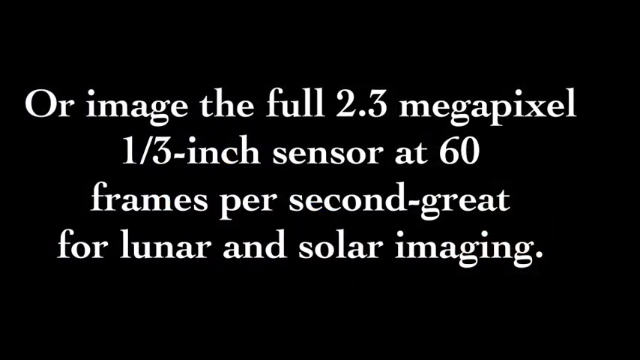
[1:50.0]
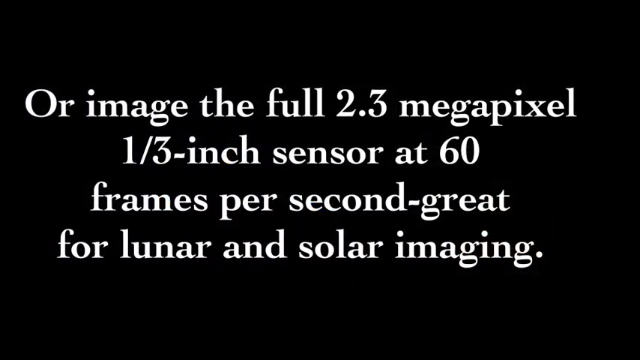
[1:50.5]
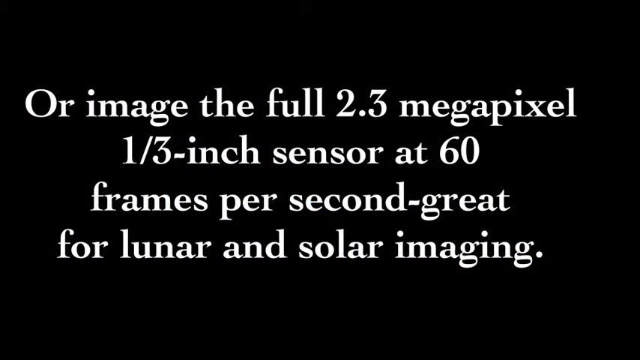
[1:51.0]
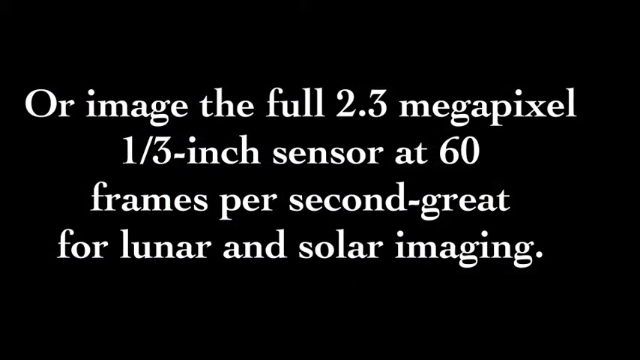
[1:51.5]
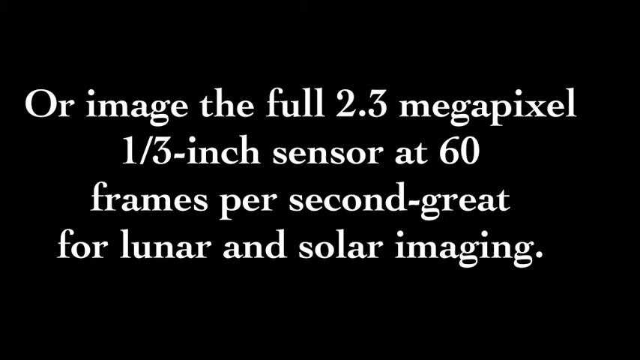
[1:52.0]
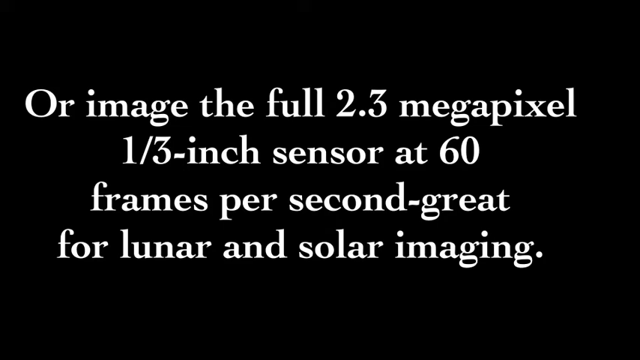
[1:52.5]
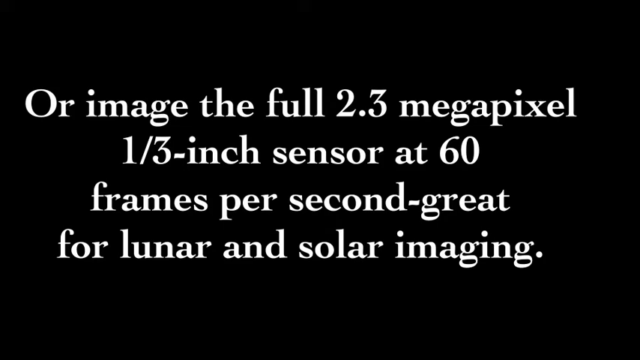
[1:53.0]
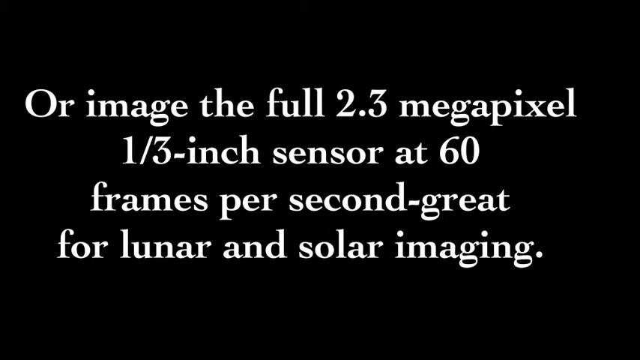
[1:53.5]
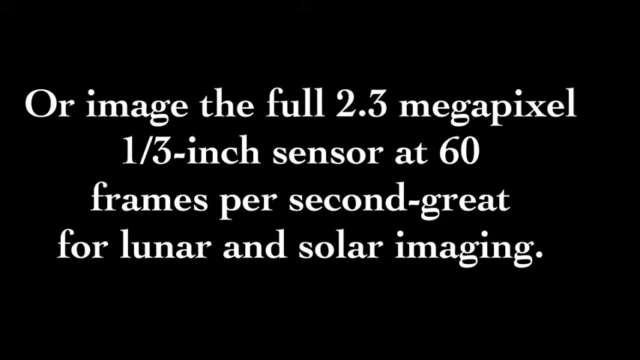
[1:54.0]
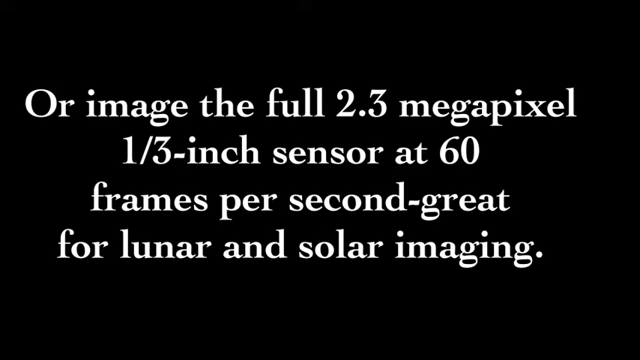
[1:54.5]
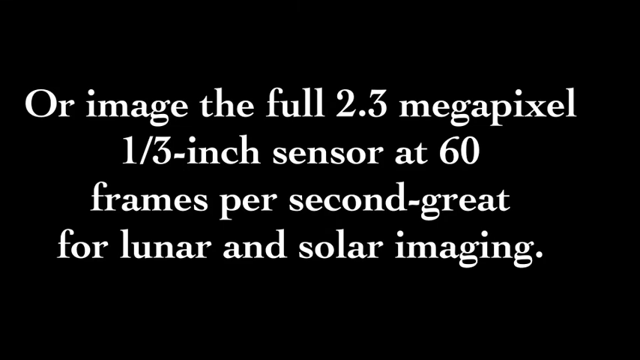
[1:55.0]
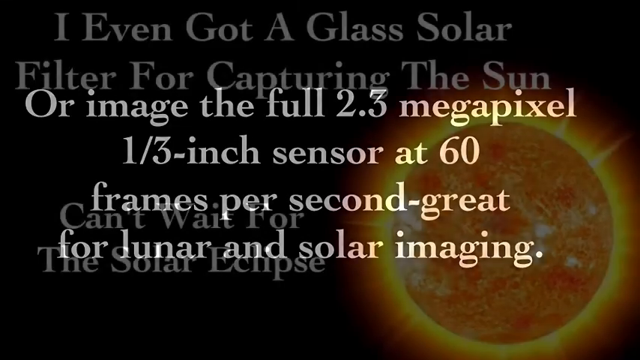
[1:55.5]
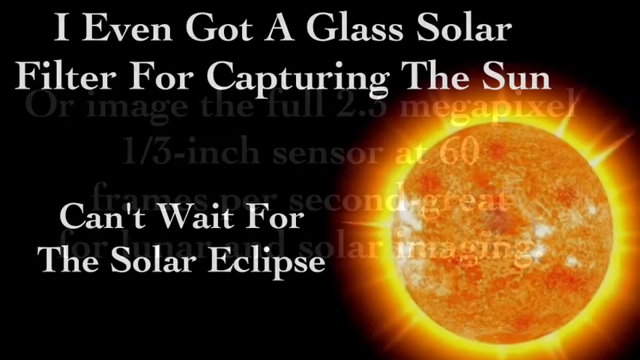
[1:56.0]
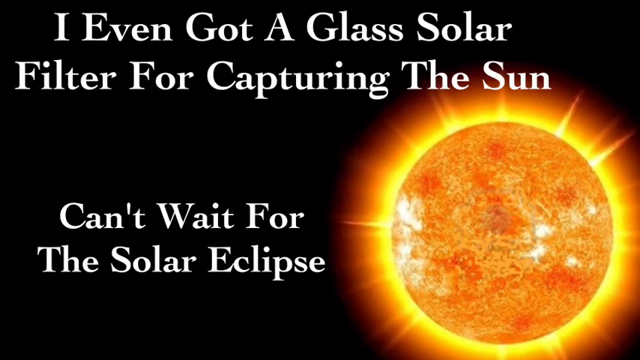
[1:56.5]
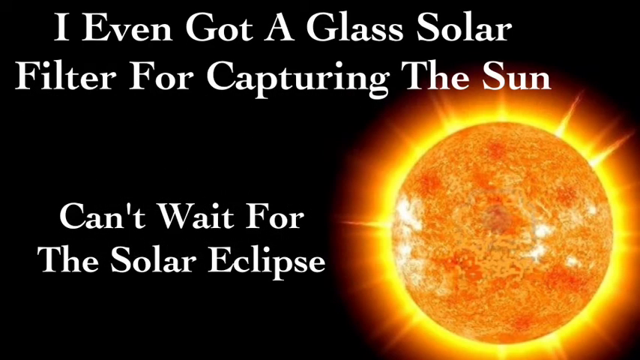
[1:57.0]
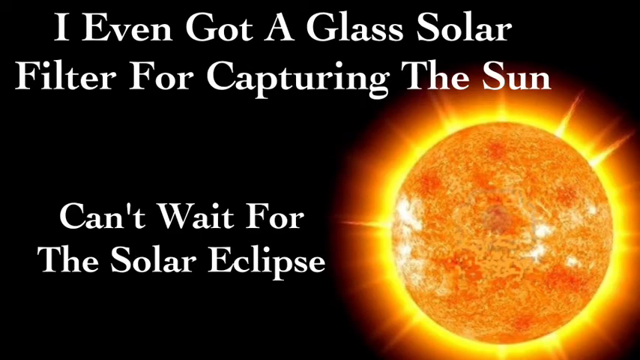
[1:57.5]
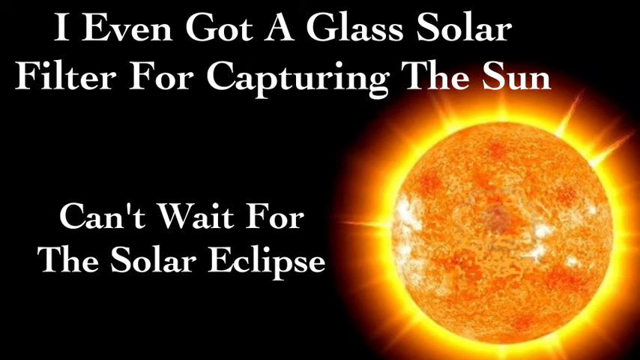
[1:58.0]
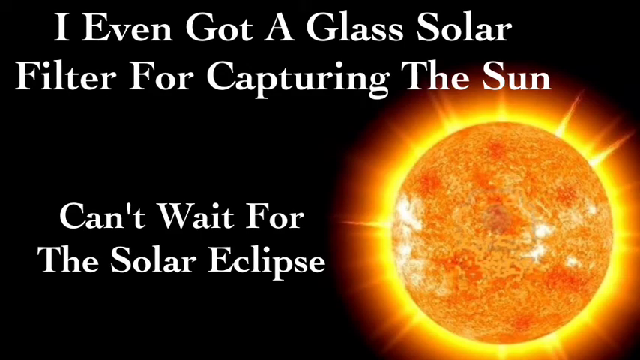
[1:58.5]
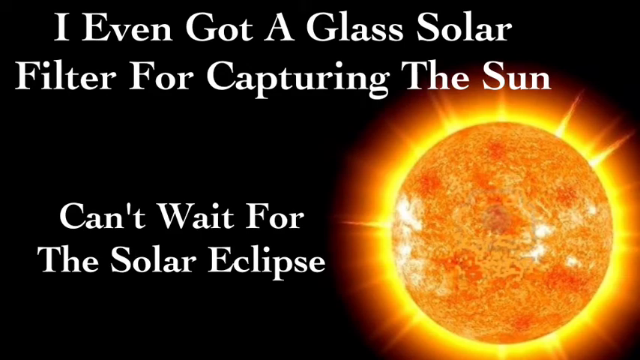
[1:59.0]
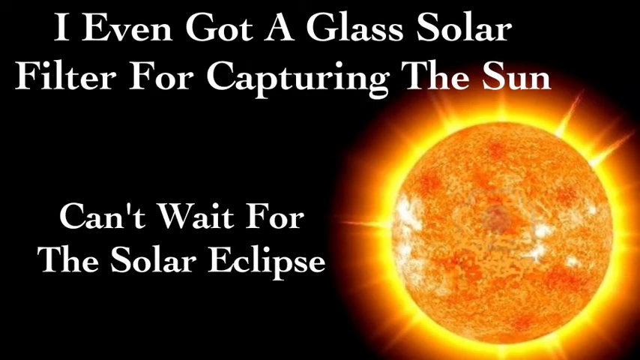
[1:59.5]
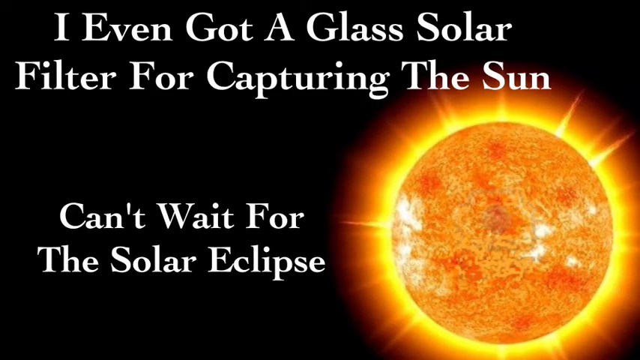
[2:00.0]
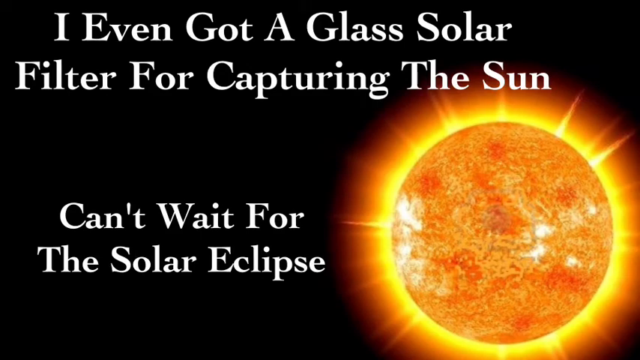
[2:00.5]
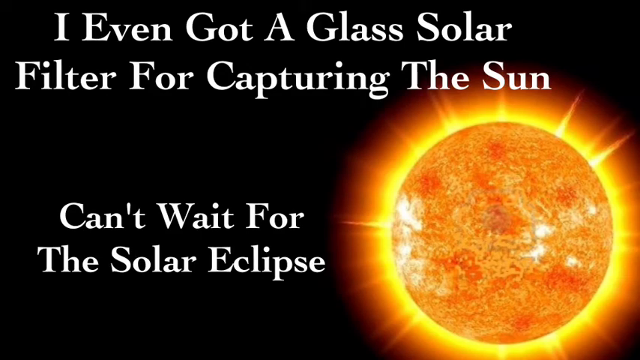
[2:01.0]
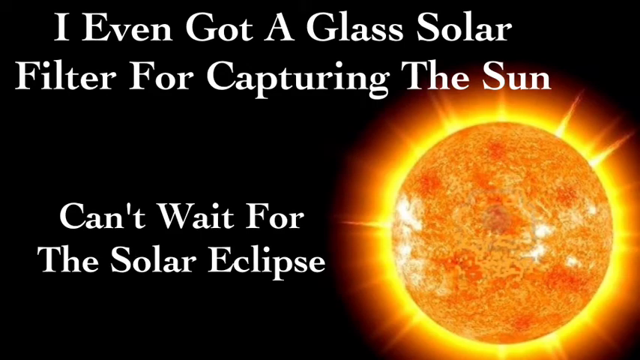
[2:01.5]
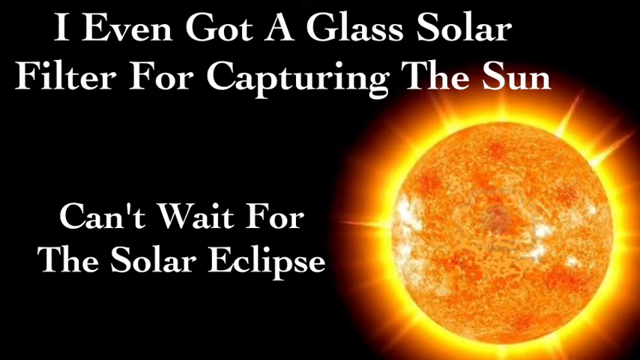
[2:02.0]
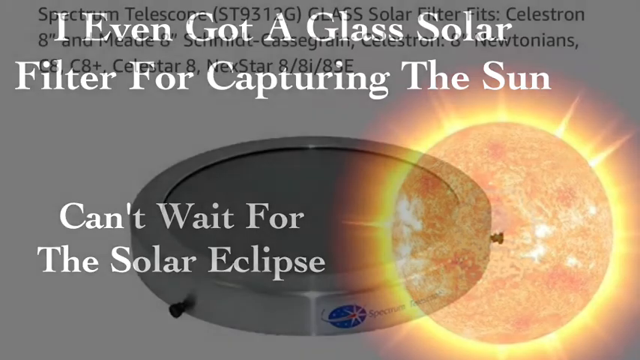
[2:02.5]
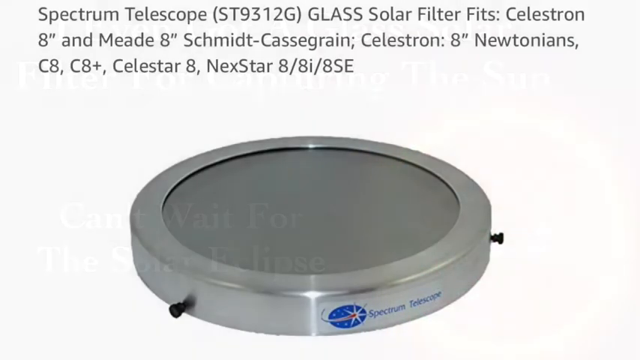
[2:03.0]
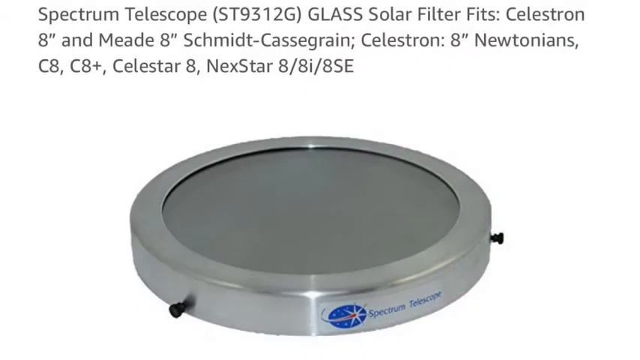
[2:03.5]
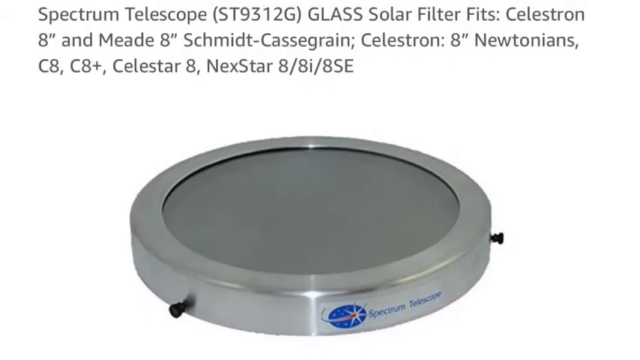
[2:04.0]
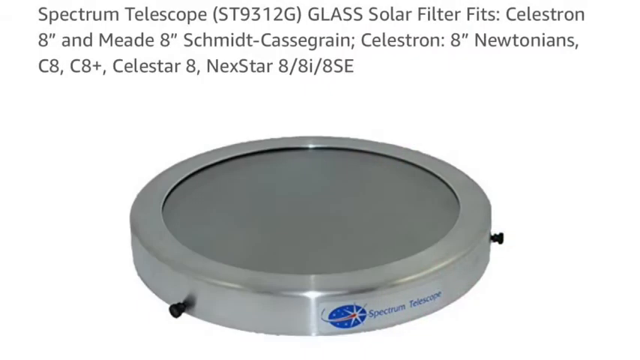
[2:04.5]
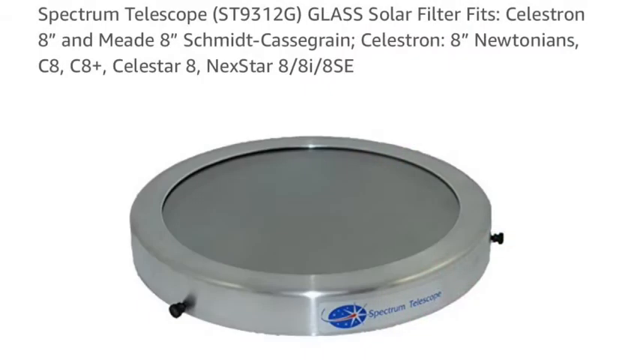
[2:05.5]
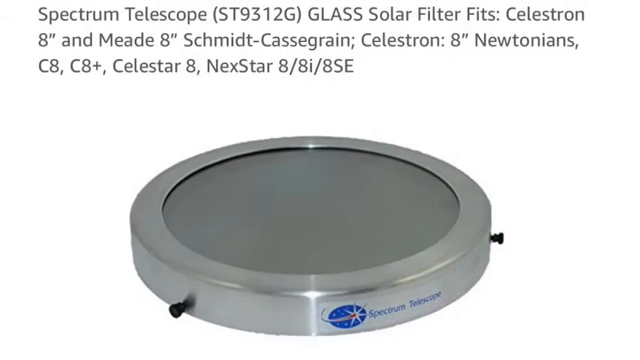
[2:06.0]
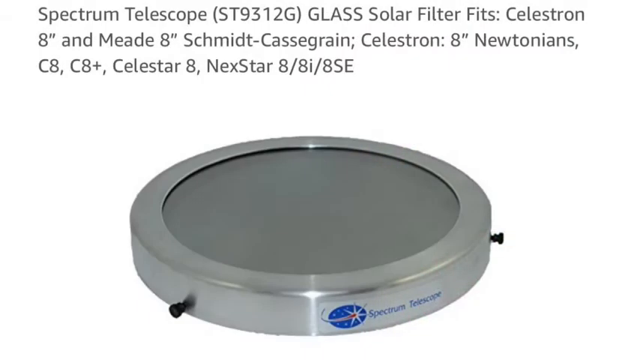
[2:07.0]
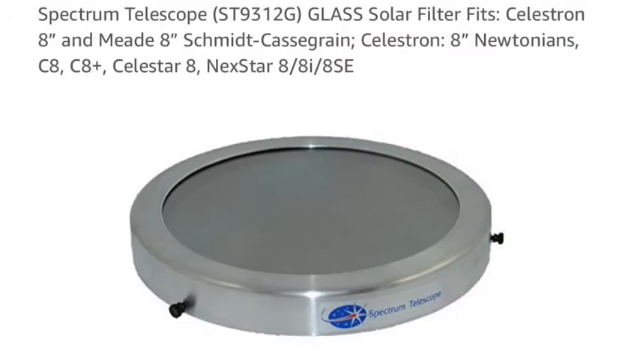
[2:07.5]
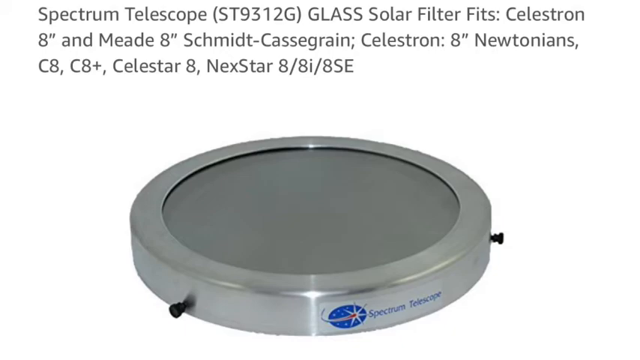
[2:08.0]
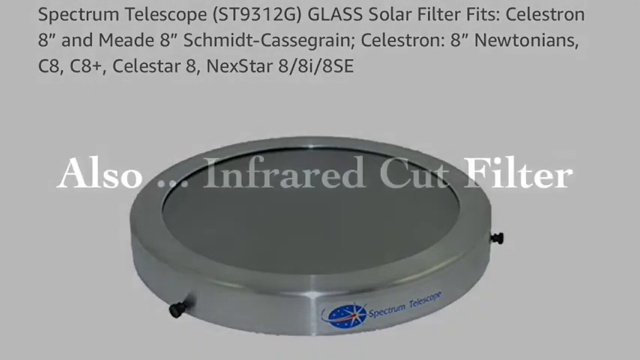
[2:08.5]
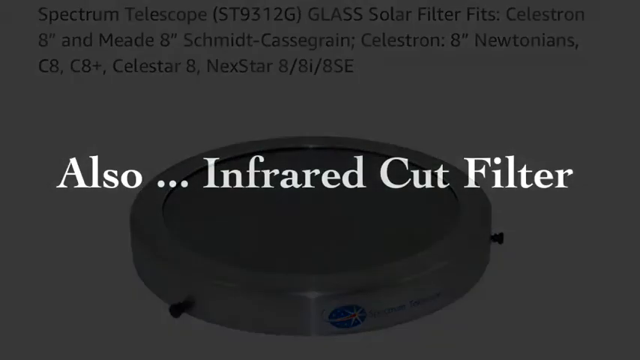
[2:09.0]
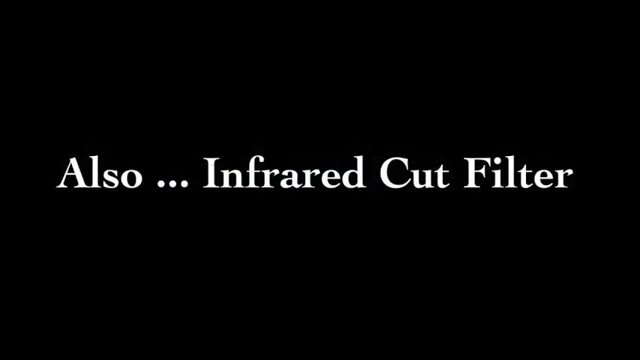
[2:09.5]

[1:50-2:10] A black background shows bolded white text that says "or image the full 2.3 megapixel one-third inch sensor at 60 frames per second great for lunar and solar imaging." It transitions to a black background with bolded white text that says "I even got a glass solar filter for capturing the sun can't wait for the solar eclipse", with a photo of the sun to the right. The sun has a very large red glow surrounding it and a smaller yellow glow, with a lot of texture that kind of looks like white splotchy areas, as well as darker orange and lighter yellow. Next, a white background shows gray text beginning "spectrum telescope ST 9312 G glass solar filter fits celestron 8 inch", with the spectrum telescope below it. Then a black background shows bolded white text that says "also... infrared cut filter".